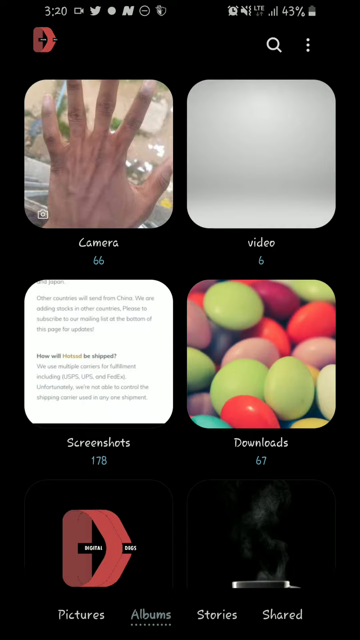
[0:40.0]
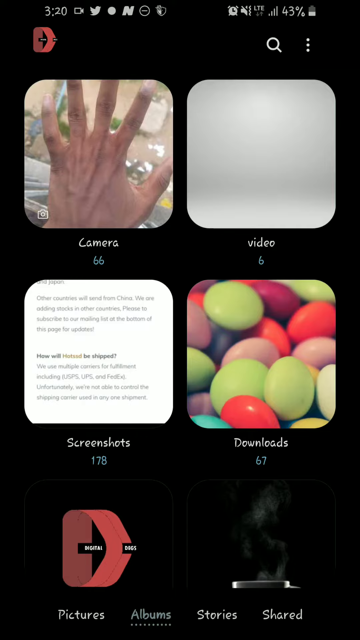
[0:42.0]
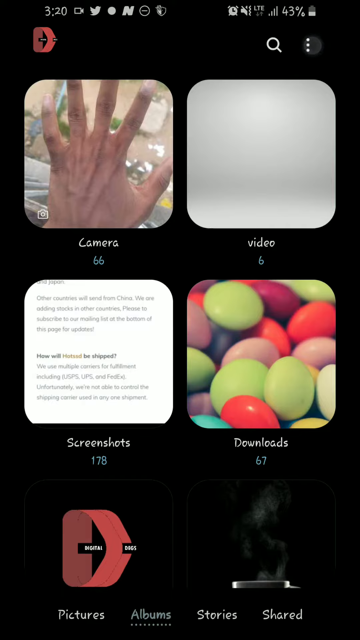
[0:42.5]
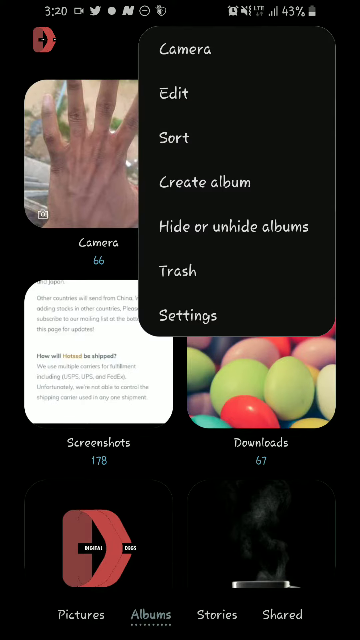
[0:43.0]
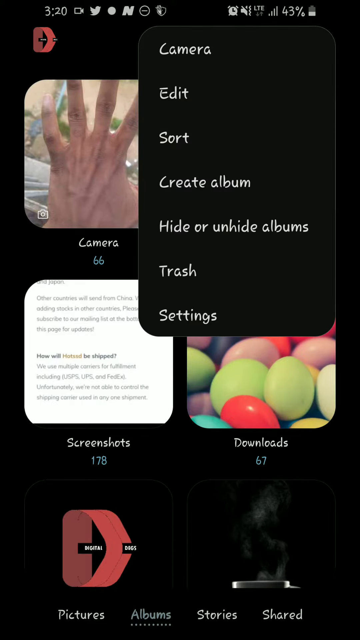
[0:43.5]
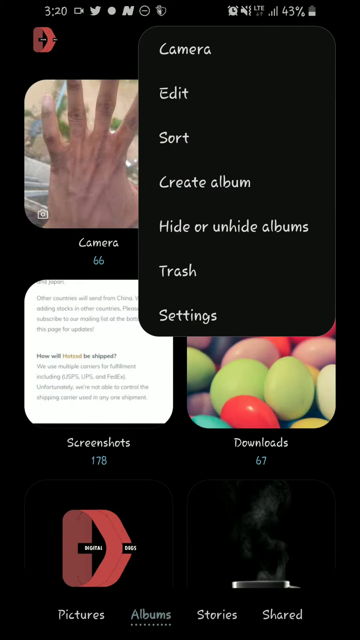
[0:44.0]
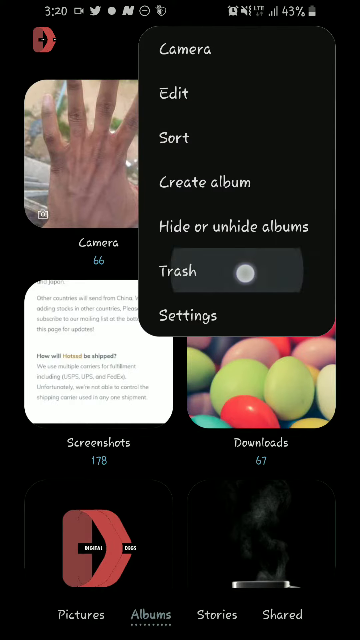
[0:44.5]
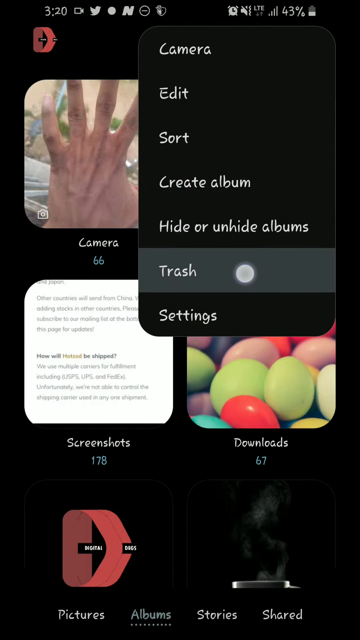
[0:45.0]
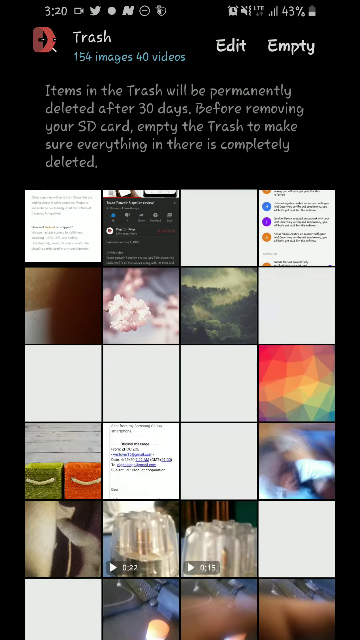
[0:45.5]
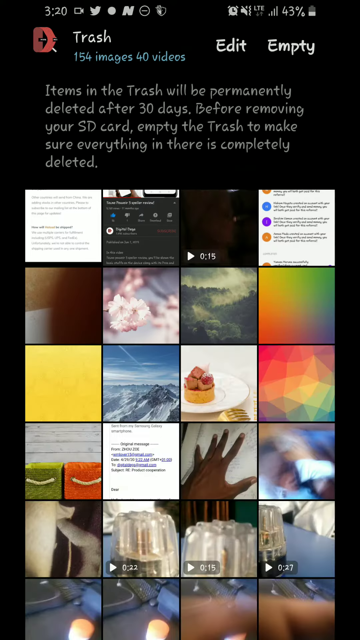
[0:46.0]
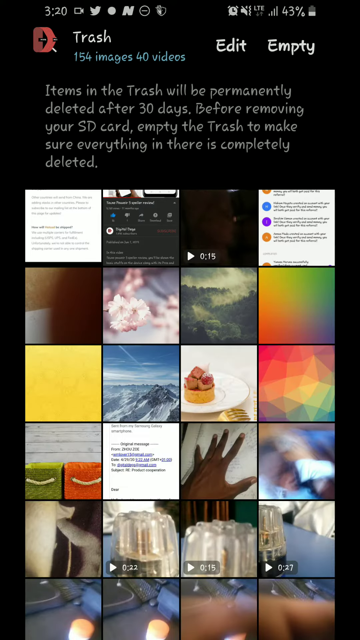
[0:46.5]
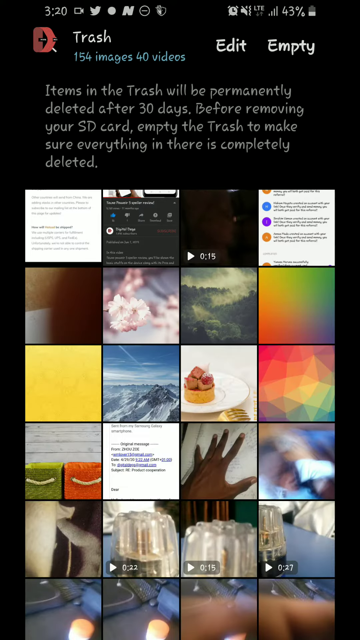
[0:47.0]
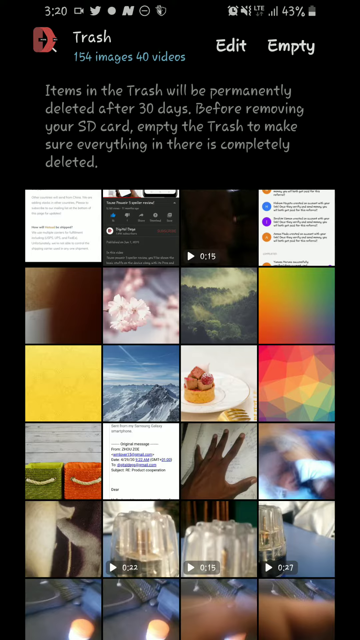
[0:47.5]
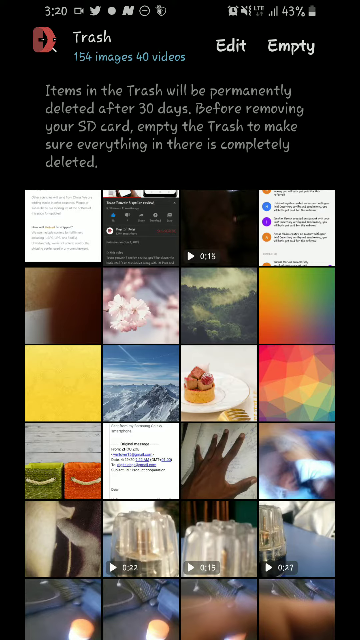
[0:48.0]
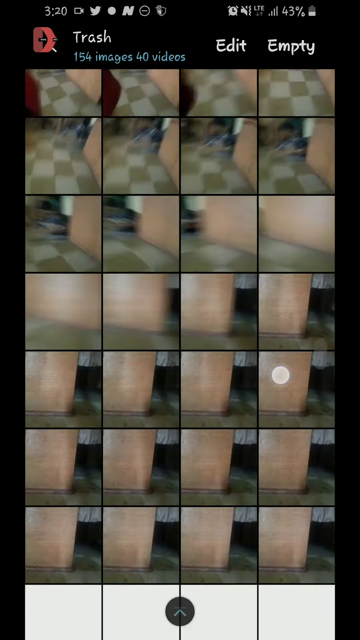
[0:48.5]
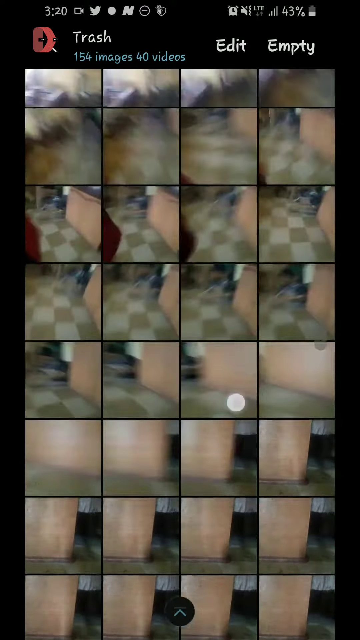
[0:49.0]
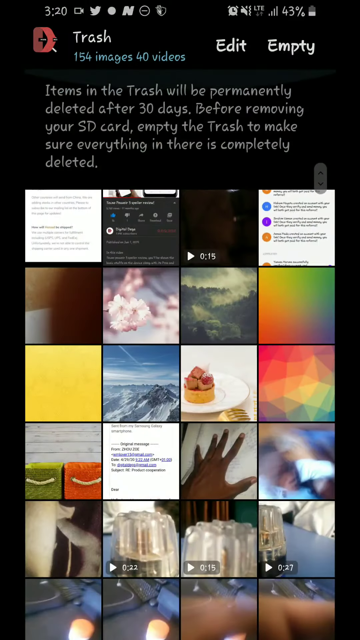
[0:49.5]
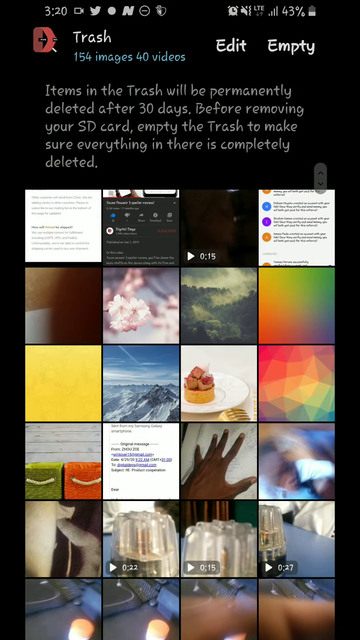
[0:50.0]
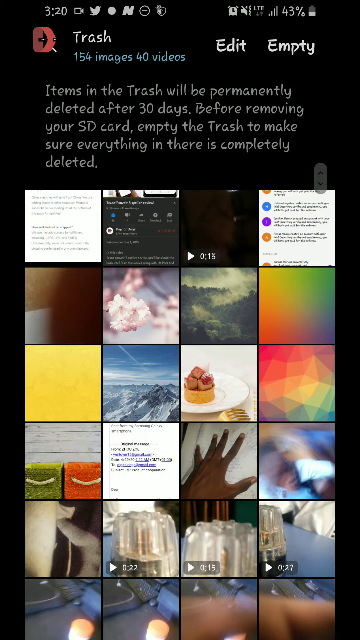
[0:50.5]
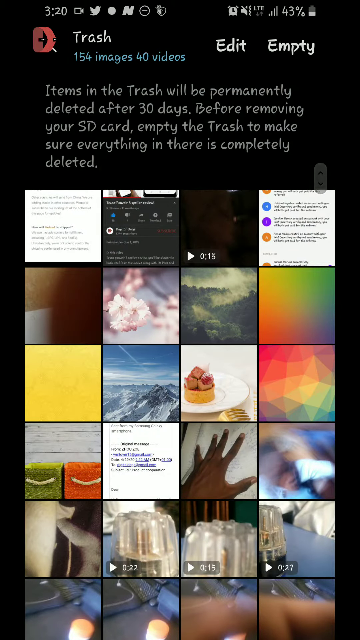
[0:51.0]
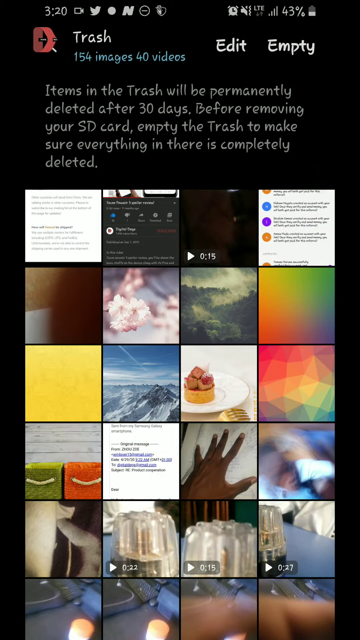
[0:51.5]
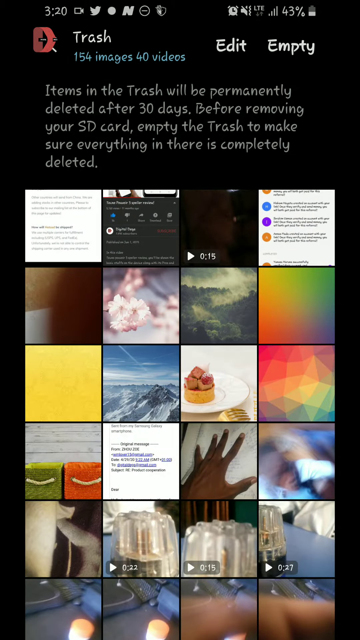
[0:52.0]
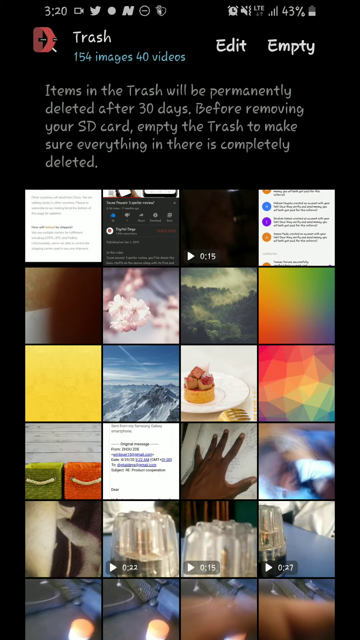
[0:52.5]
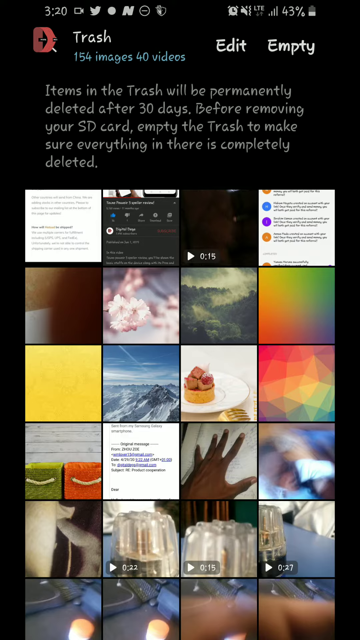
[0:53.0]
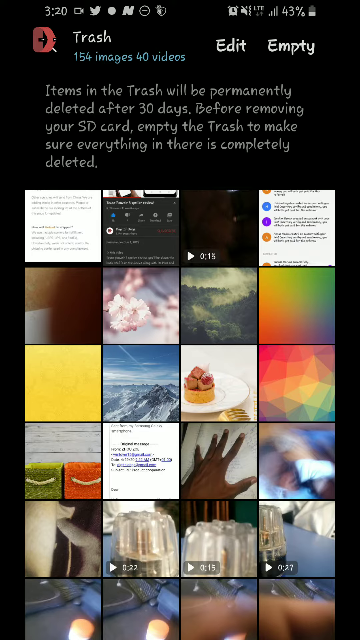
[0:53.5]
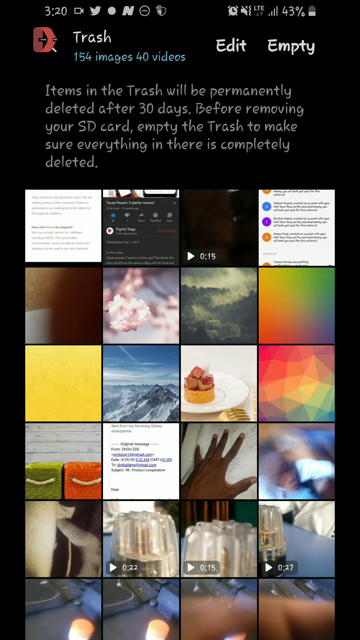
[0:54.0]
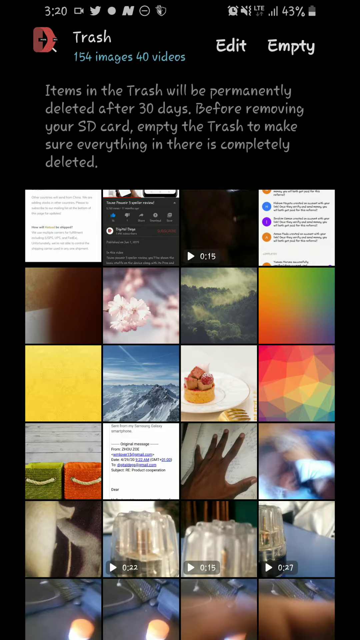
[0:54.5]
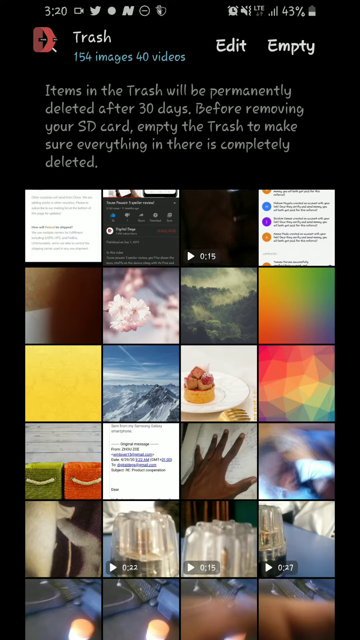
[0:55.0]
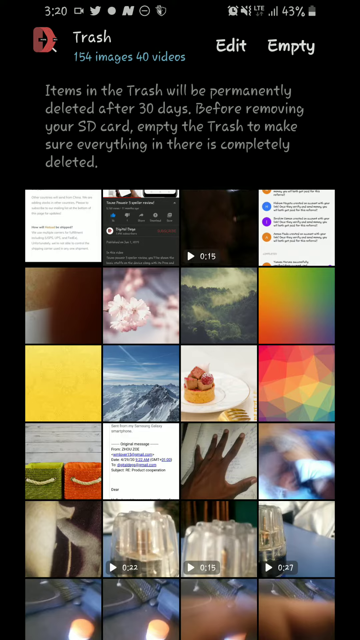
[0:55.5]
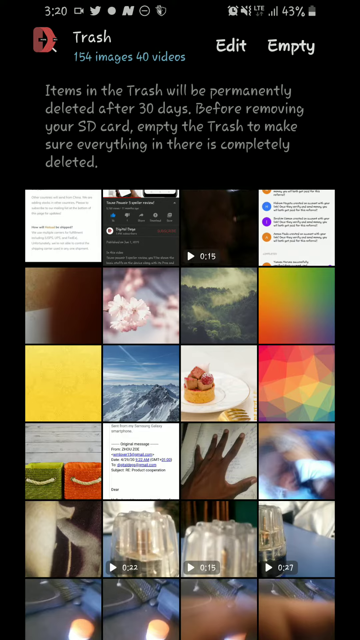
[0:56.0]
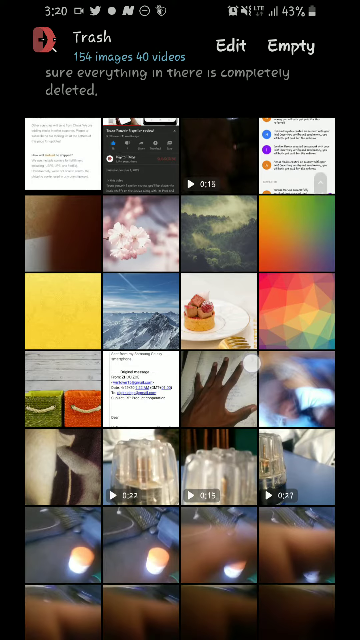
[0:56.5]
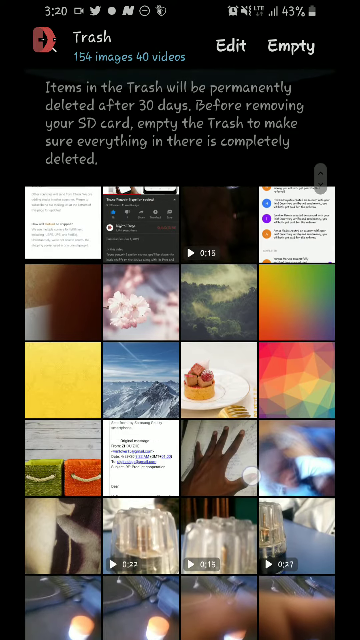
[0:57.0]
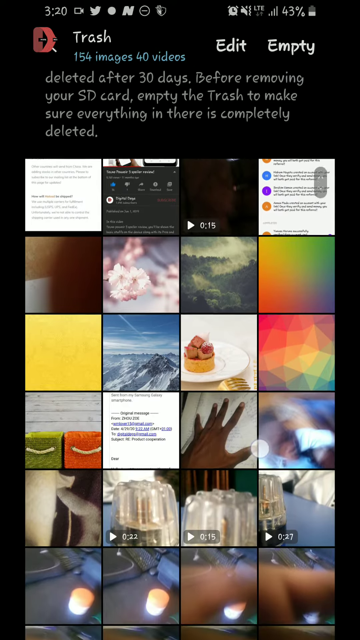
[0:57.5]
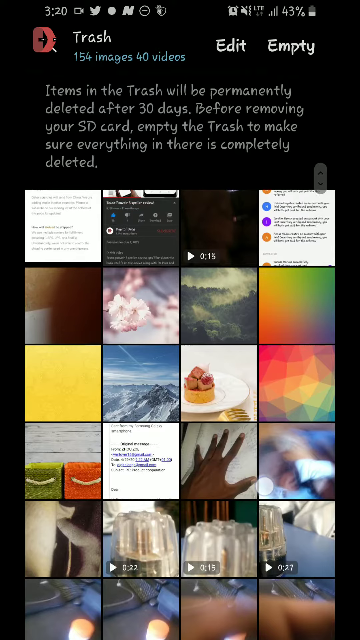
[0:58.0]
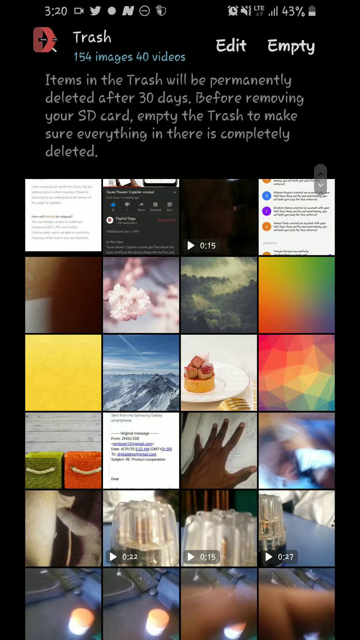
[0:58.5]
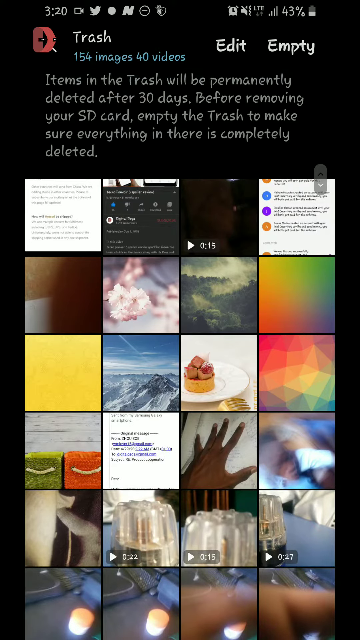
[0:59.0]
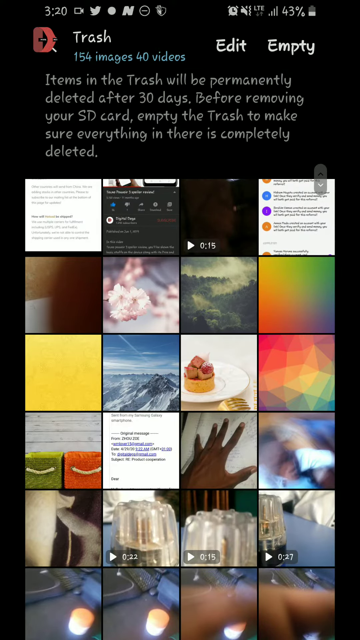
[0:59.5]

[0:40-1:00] The gallery homepage is on screen after a screenshot has just been deleted. He quickly taps the three dots at the top right, opening the options menu with camera, edit, sort, hide or unhide albums, trash and settings. A little dot shows where he taps, and he taps right on trash. The trash folder opens, apparently containing about 154 images and 40 videos. He scrolls down and up and then stays on this screen for a while.